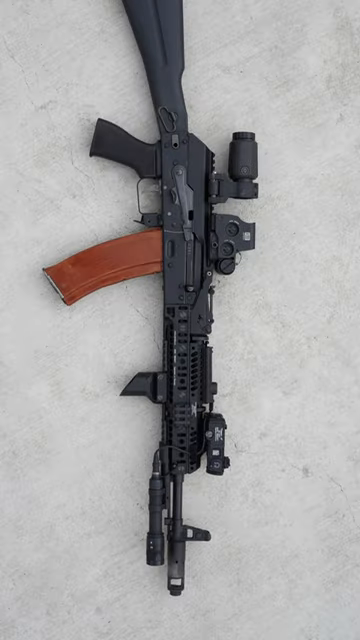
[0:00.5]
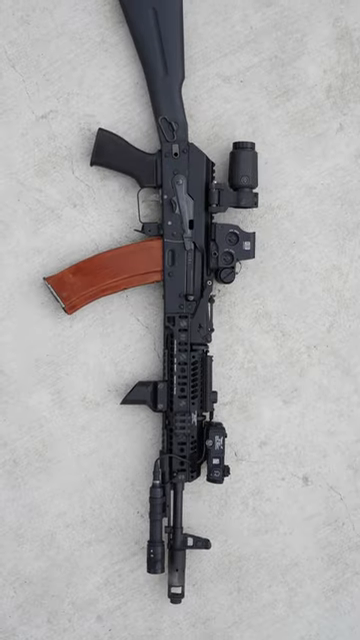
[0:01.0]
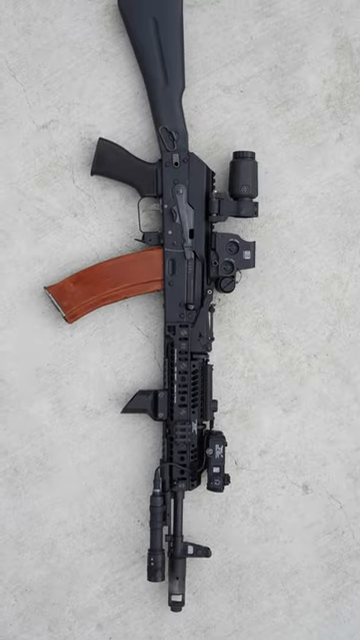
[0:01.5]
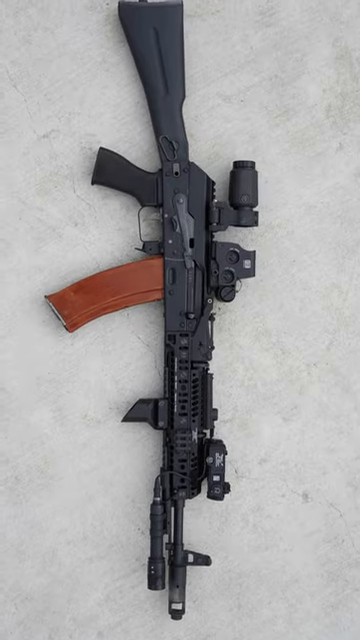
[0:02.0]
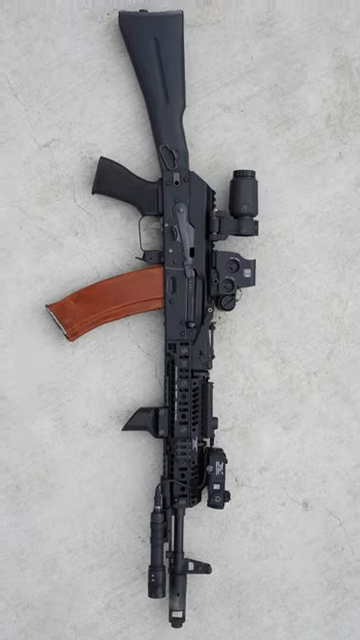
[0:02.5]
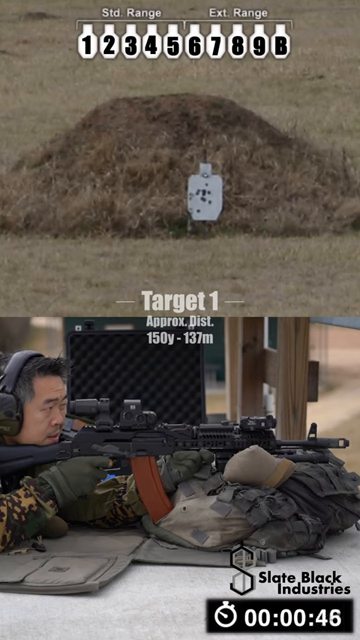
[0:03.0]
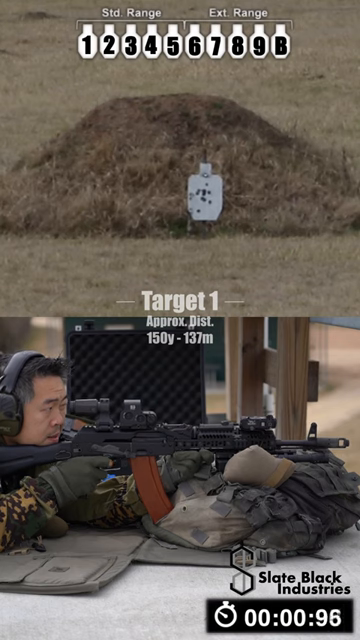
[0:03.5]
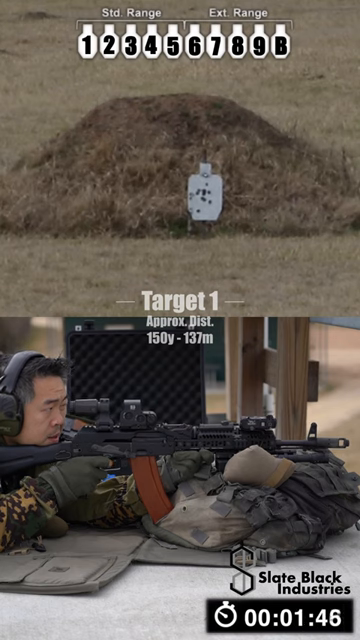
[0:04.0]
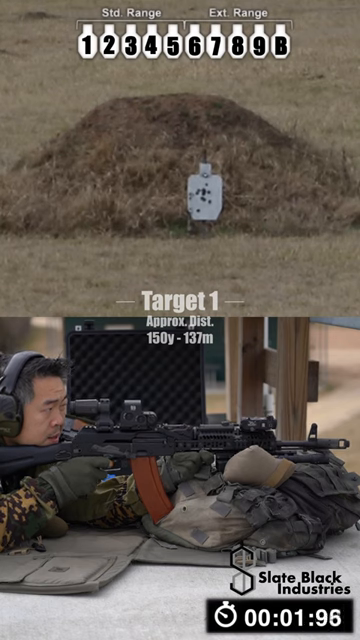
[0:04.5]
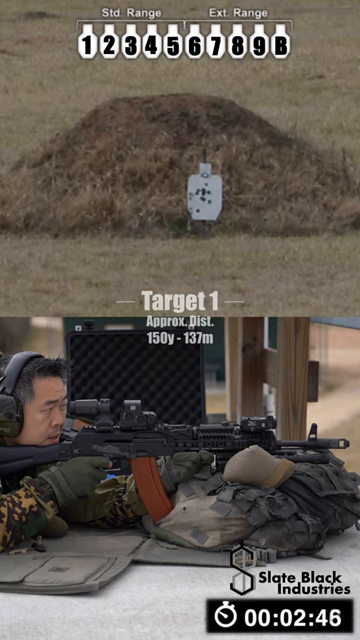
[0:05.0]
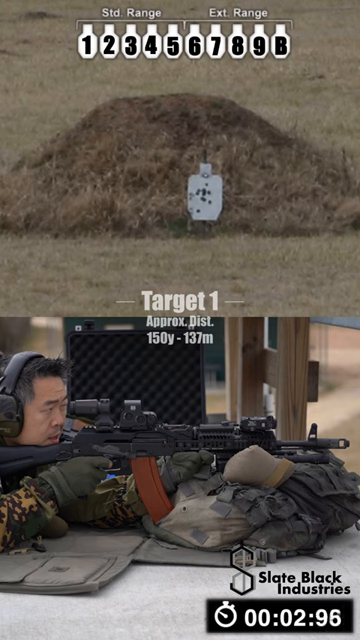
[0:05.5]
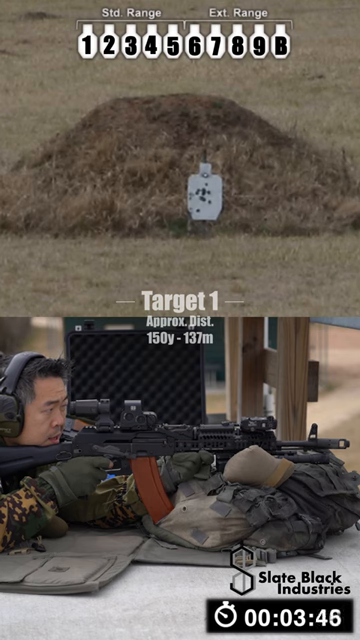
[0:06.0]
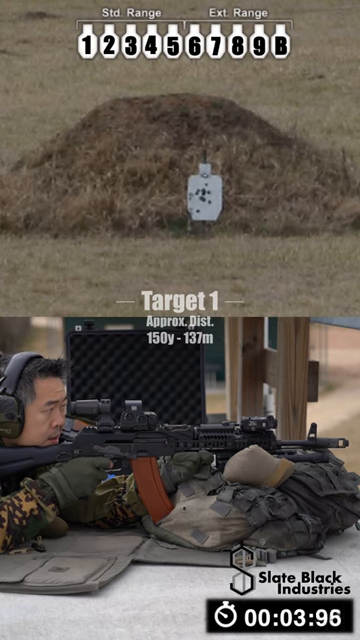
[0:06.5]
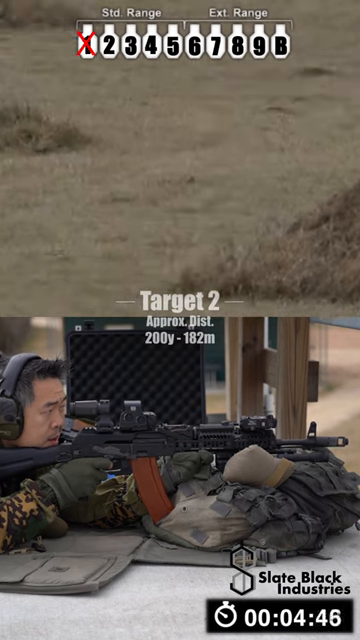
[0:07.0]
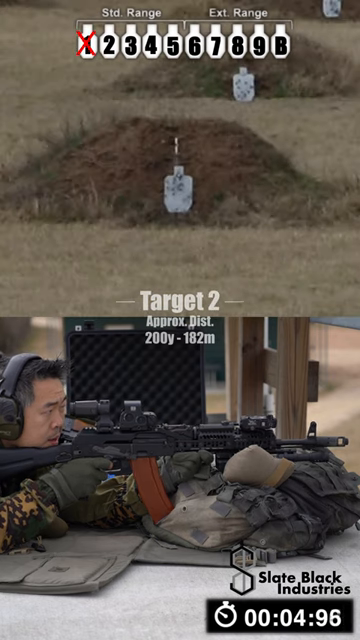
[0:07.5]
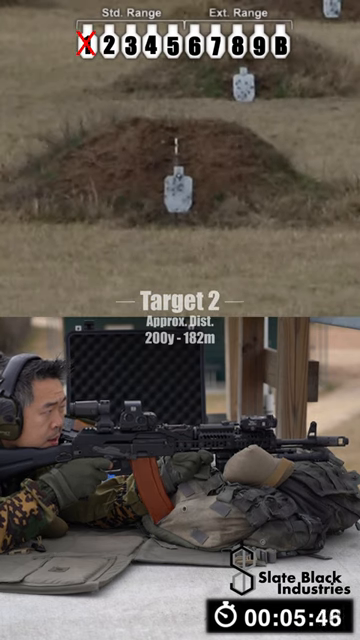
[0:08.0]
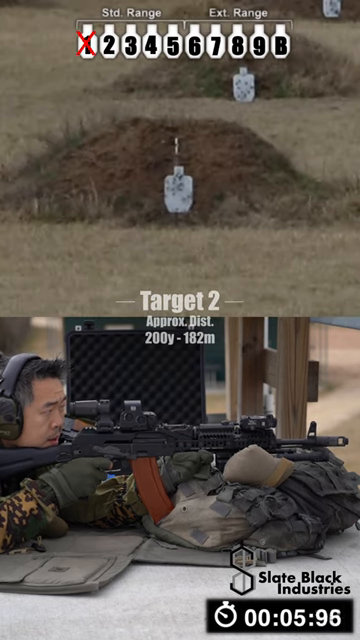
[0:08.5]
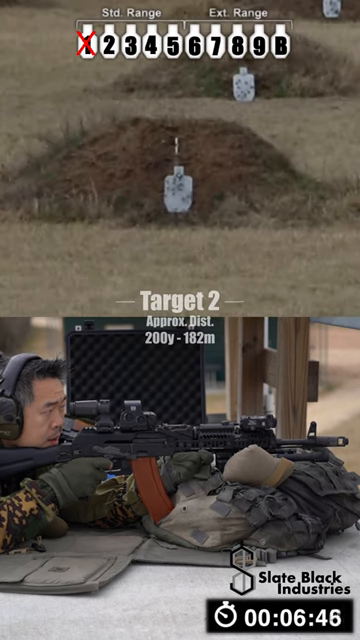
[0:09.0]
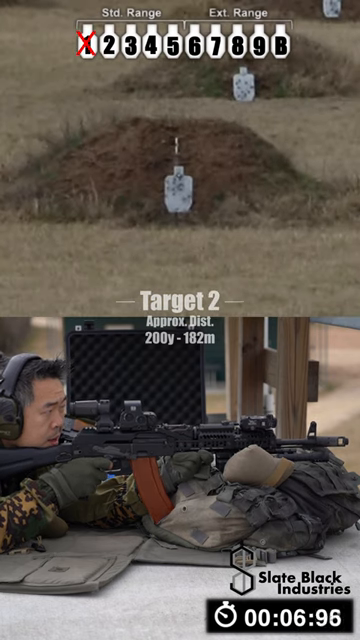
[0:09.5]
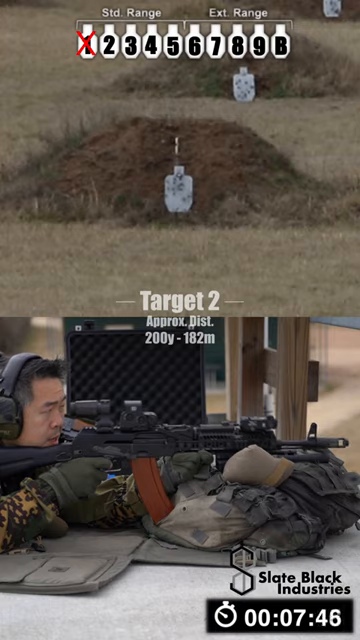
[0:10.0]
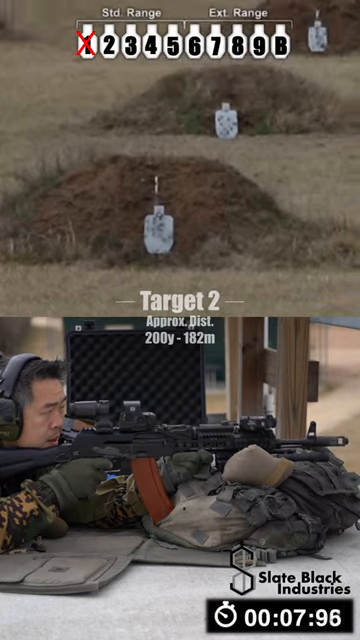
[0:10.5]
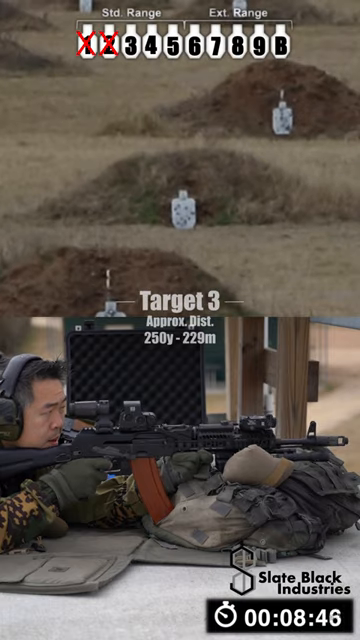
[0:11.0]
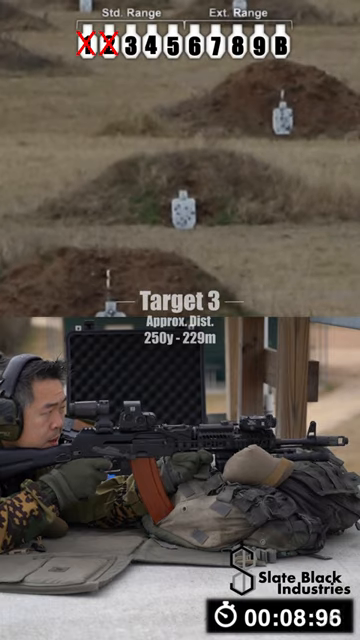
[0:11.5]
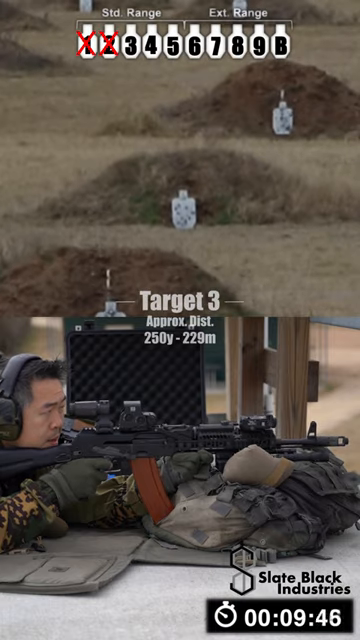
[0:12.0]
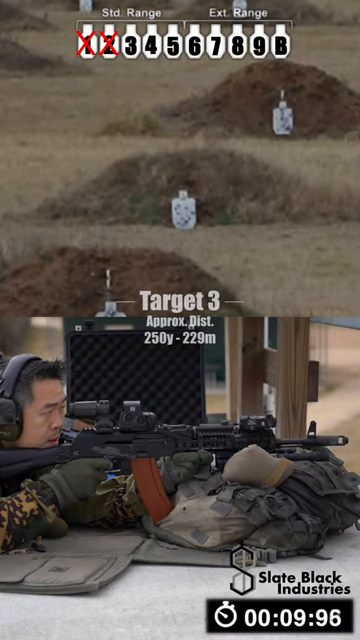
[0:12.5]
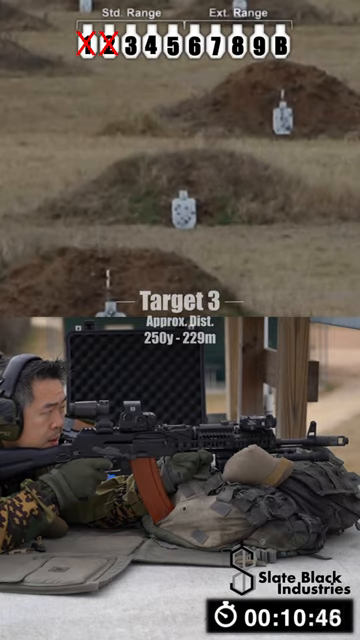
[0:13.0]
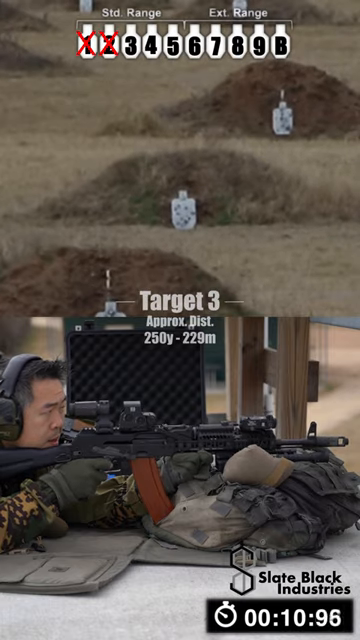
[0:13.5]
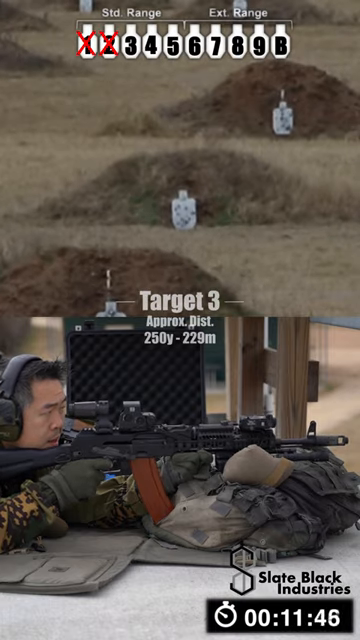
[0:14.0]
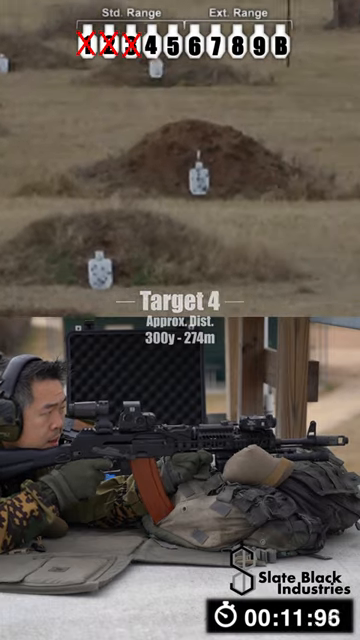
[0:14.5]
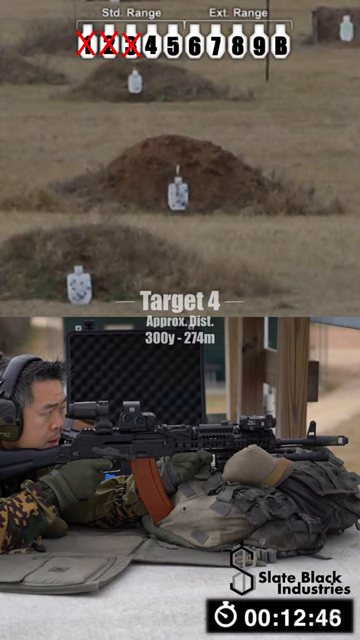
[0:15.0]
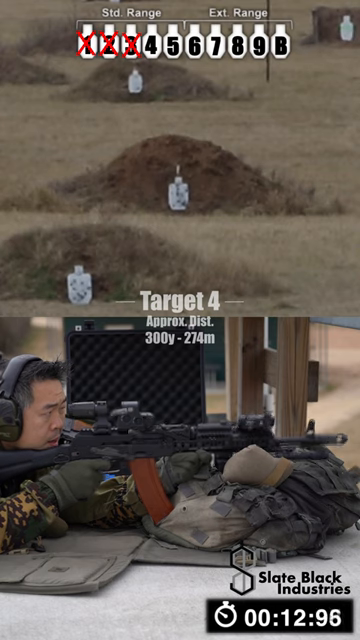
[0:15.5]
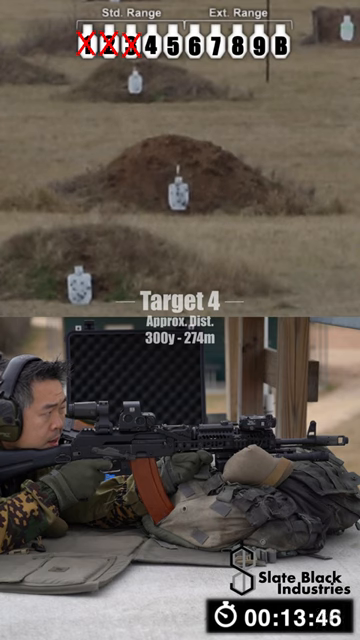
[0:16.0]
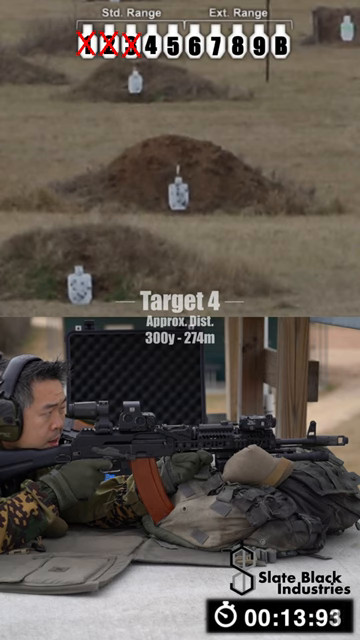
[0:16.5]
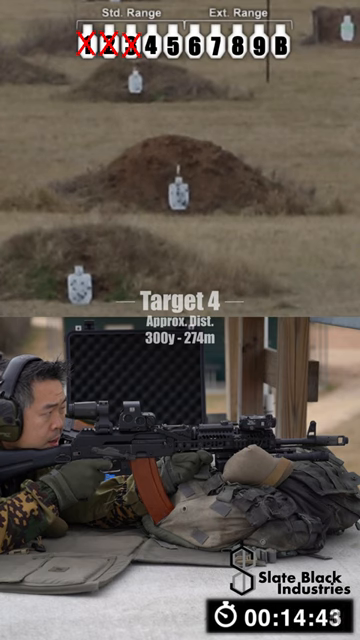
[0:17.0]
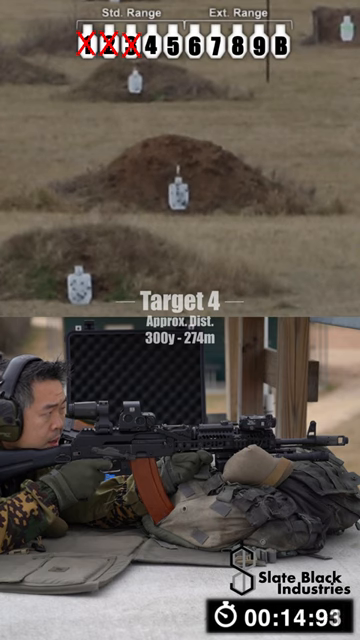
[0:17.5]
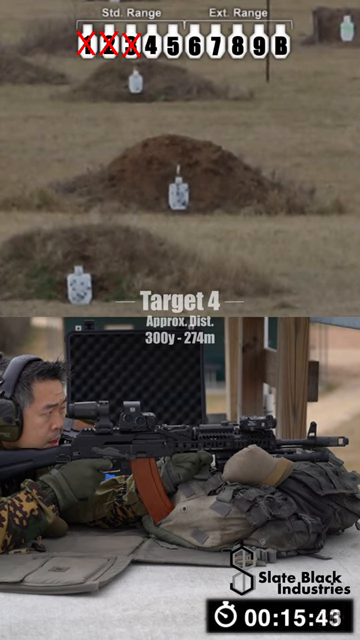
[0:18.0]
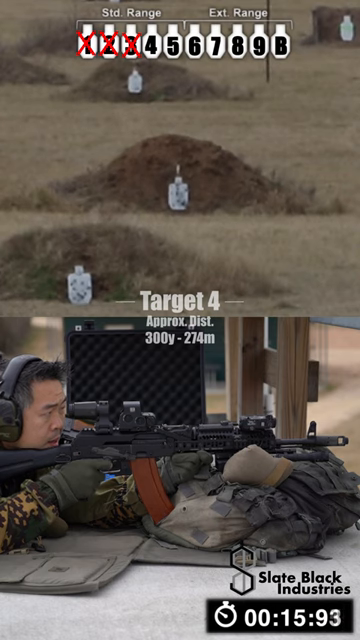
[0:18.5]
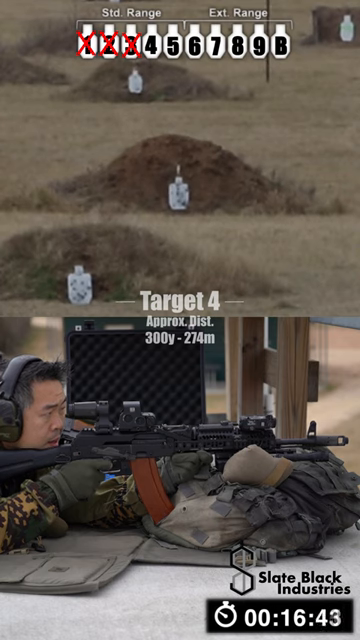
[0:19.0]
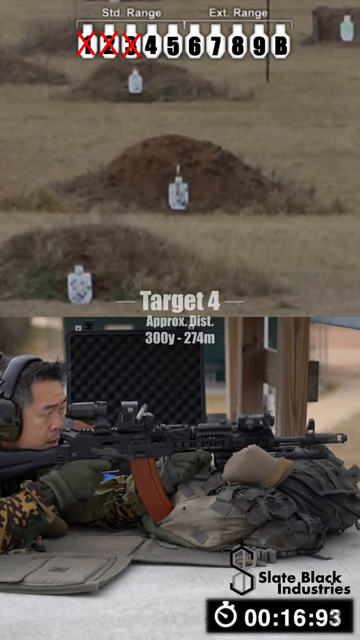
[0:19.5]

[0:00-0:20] Shot in a tall, narrow portrait orientation, the video was probably taken on a mobile phone. It opens on a rifle of some sort lying flat on a cement surface. The rifle is black except for its curved, brown banana clip of bullets, and it looks like it has some sort of scope. The camera pans up, and the view switches to a screen split into a top half and a bottom half. In the top half, a target is in the distance at the base of a small mound of dirt. Across the top are the numbers 1 through 9; numbers 1 through 5 are labeled "standard range", and numbers 6 through 9 plus the letter B are labeled "extended range". In the bottom half, a man lies down holding the rifle in a prone position, wearing hearing protection over his ears.